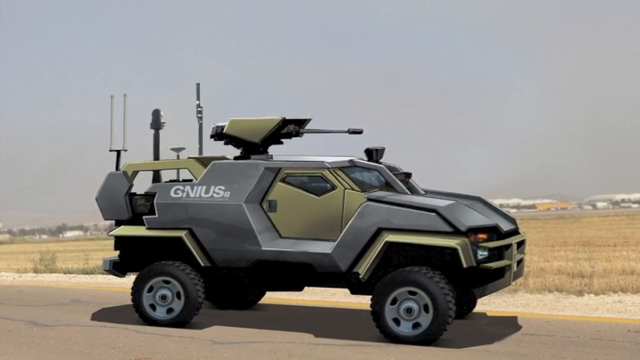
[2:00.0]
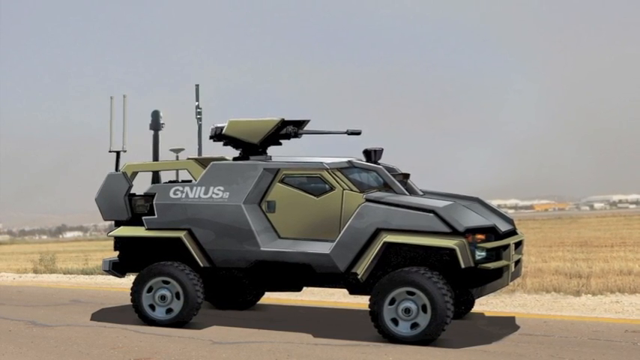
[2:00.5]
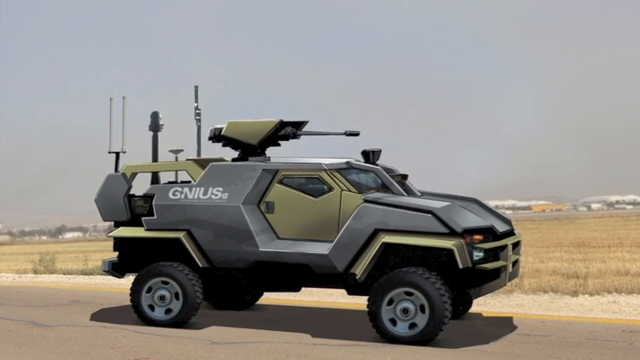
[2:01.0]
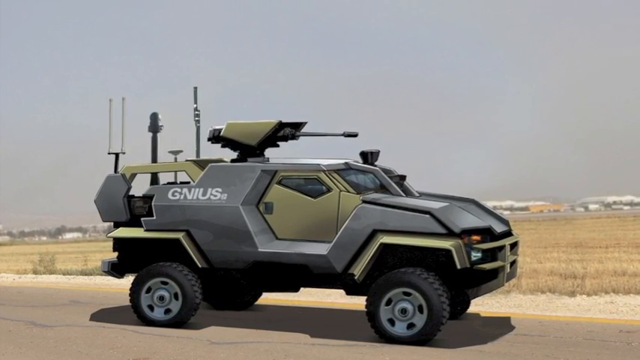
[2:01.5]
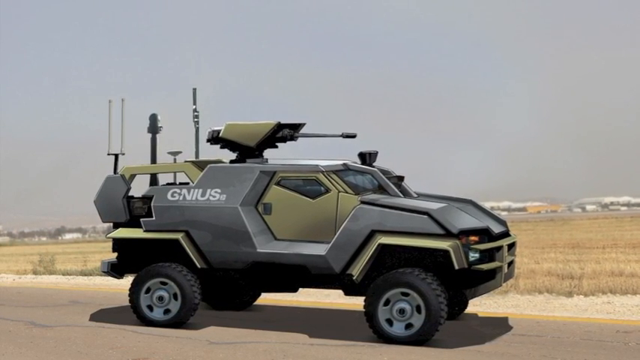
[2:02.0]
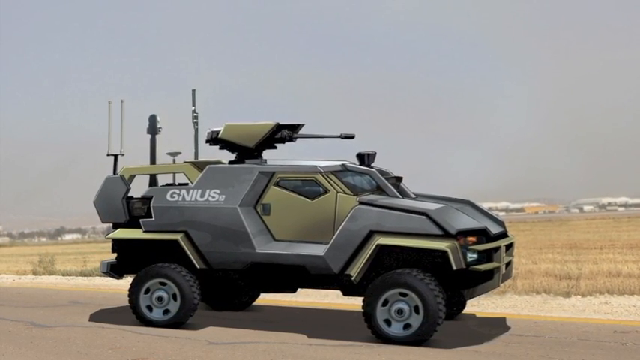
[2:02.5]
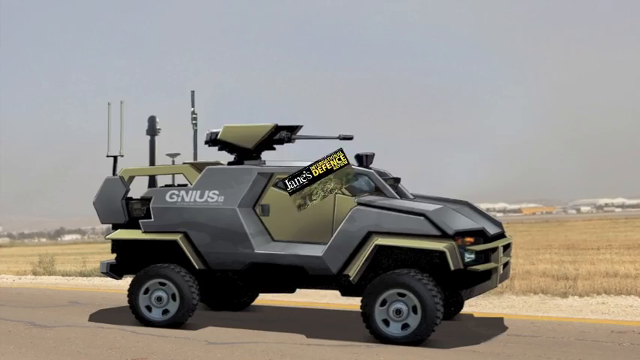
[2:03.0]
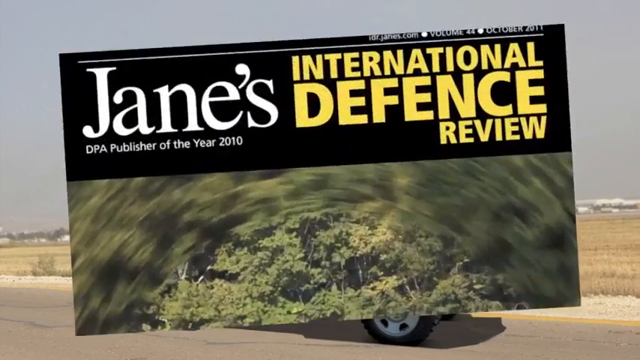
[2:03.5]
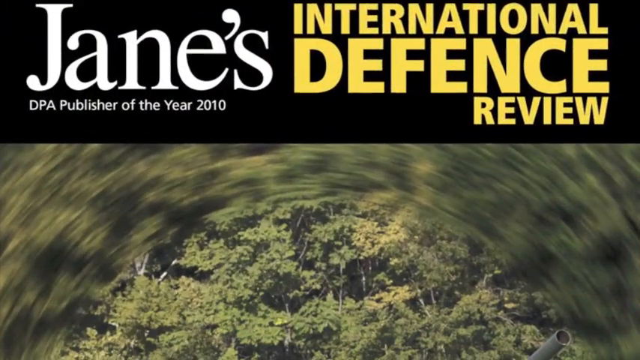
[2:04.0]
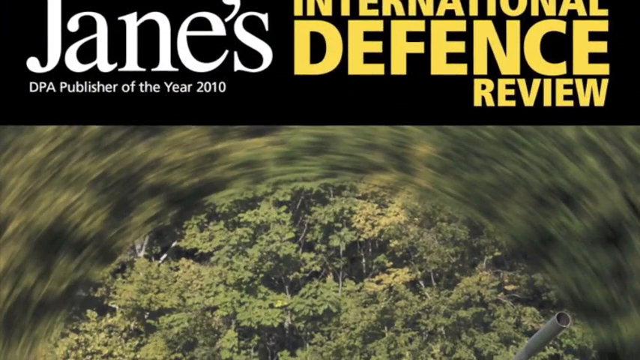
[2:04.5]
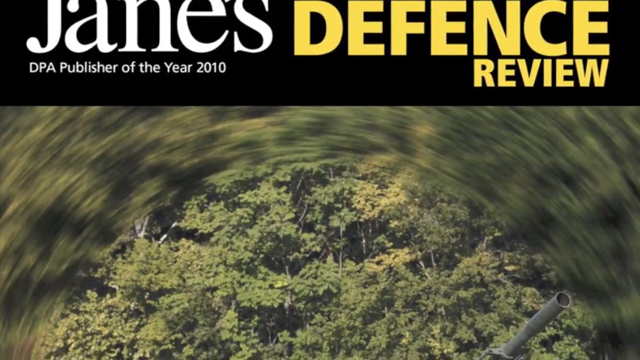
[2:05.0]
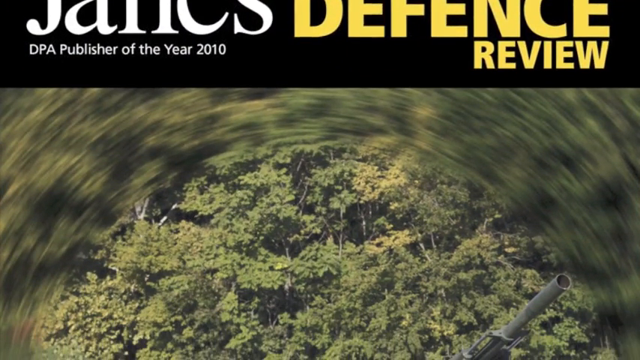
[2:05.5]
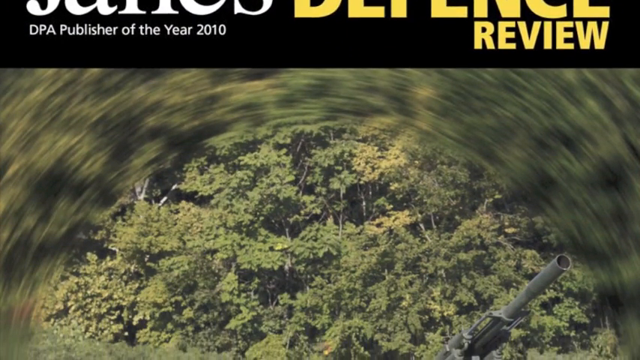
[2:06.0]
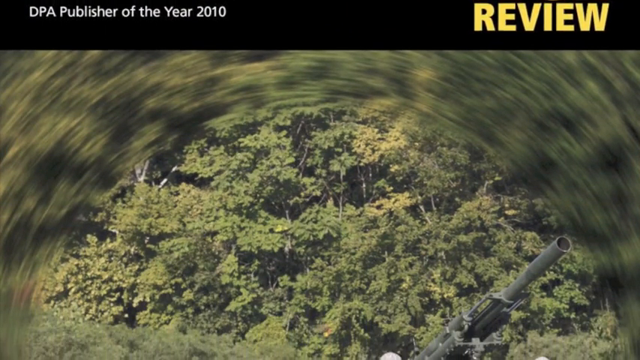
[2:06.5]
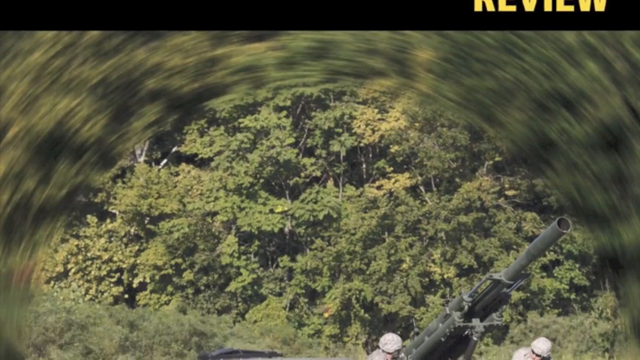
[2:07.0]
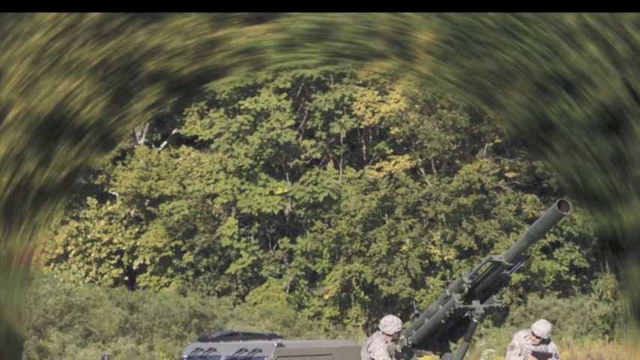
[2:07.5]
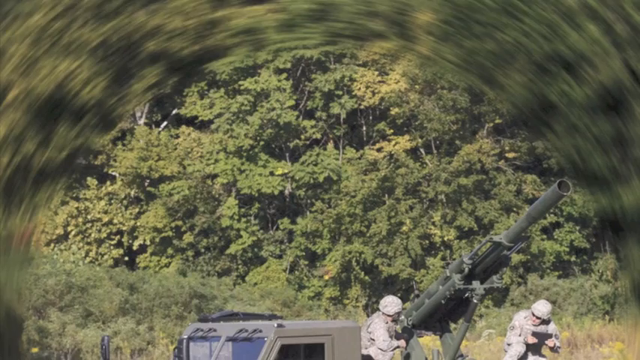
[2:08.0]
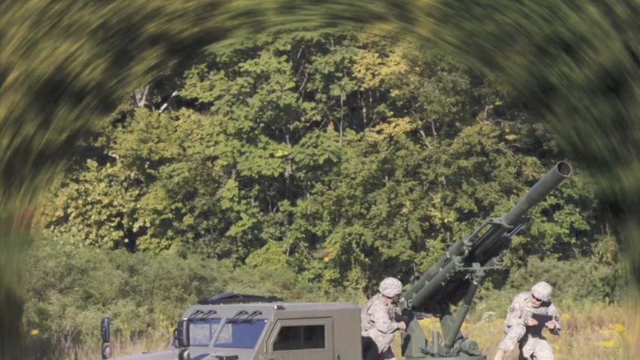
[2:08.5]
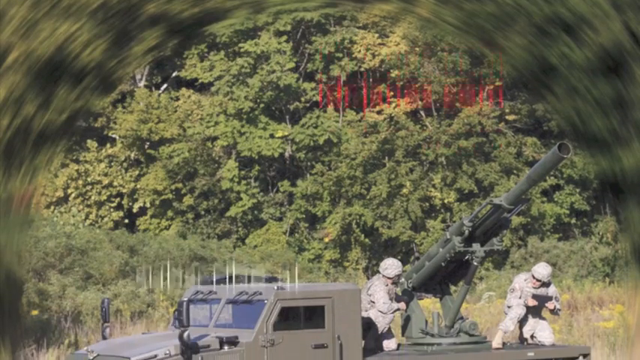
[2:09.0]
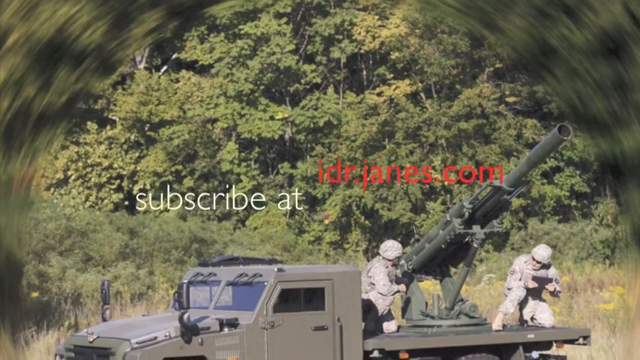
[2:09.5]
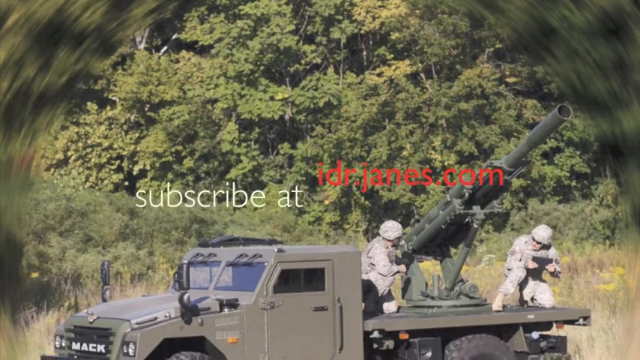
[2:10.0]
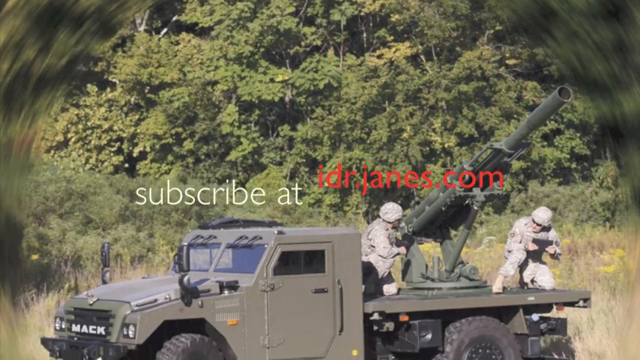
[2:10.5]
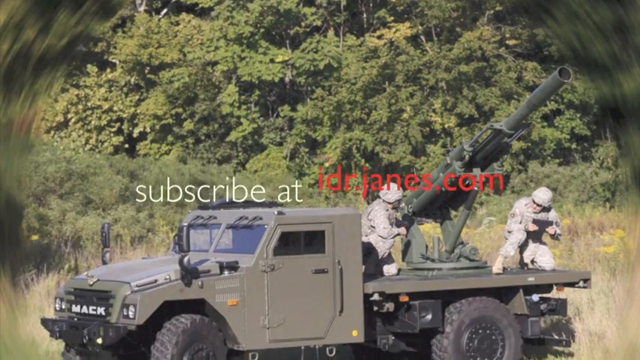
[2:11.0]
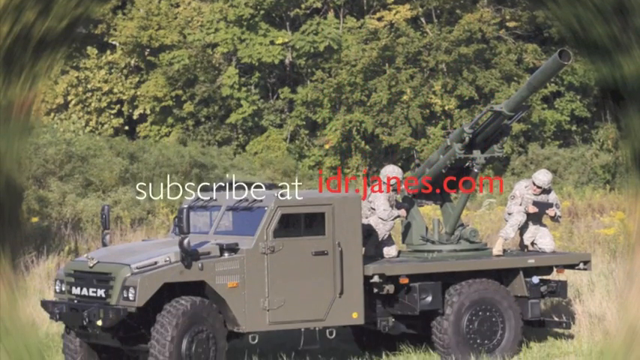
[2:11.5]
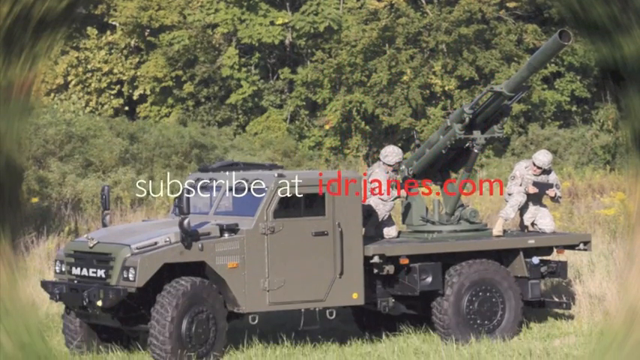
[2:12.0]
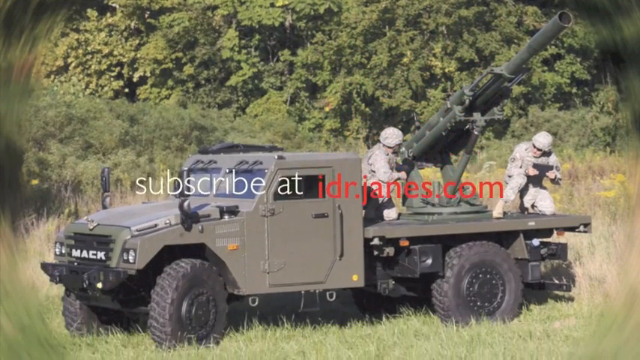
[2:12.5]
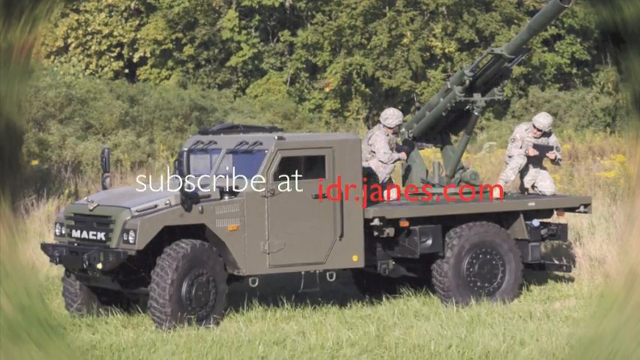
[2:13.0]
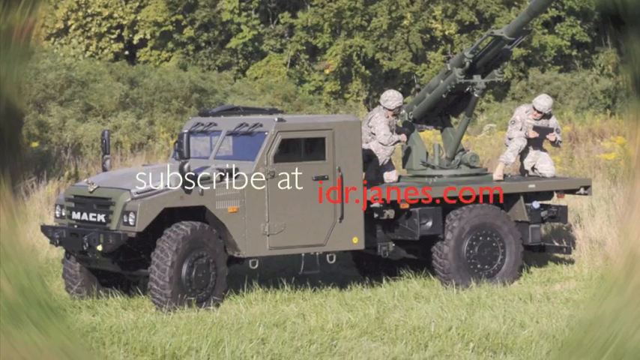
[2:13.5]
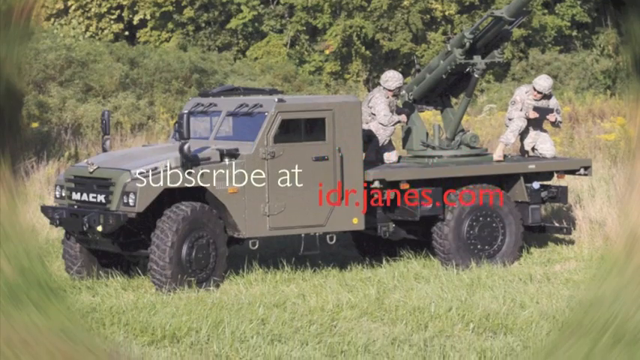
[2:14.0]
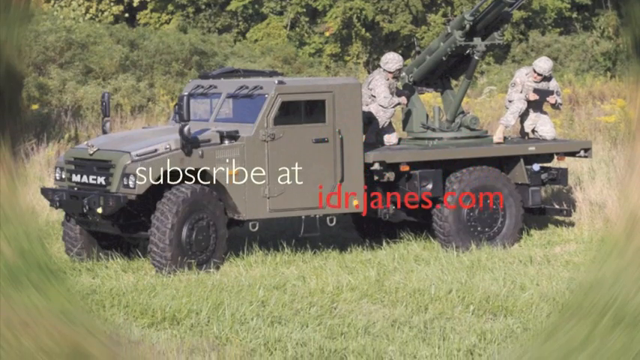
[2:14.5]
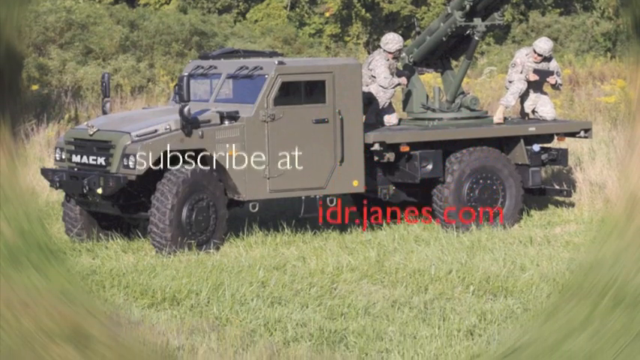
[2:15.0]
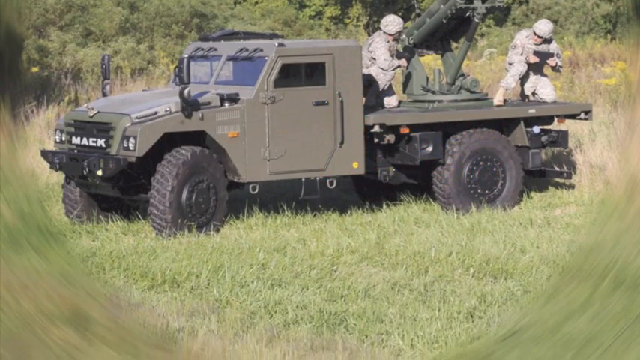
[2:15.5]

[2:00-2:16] This is probably the same car seen earlier. The background shows clear skies with no clouds at all. This time there are three structures behind the car, built onto it, which look like they are signaling something, used as a radar. The car also has a built-in weapon on top. An image of Jane's Defense Review appears. A scene of greenery follows, with the same car with the number 65 on its windowsill. There are about two to three pictures of what seem to be advertisements, showing where the military is located. The background seems to be a gloomy day, without really clear skies. The car is shown passing through a driveway or something that seems to be a road without any traffic lights; there are no red or green lights. In another scene there is an odd type of car with what seem to be giraffe stripes or patterns on it. Its wheels are very small, and it looks like there are no soldiers inside. In the background of this car there seem to be long fences.